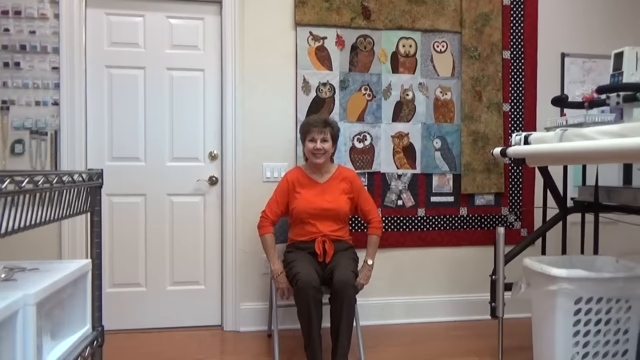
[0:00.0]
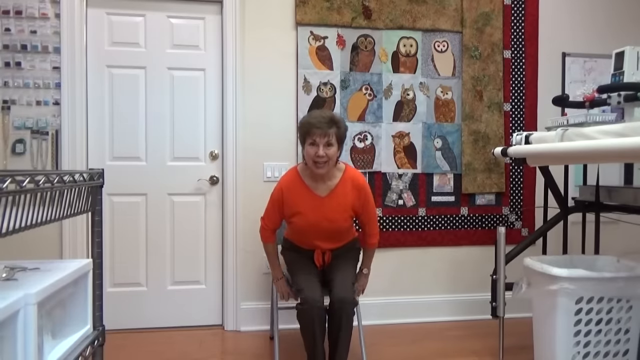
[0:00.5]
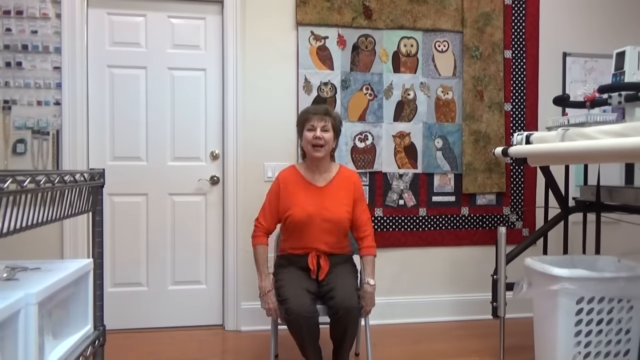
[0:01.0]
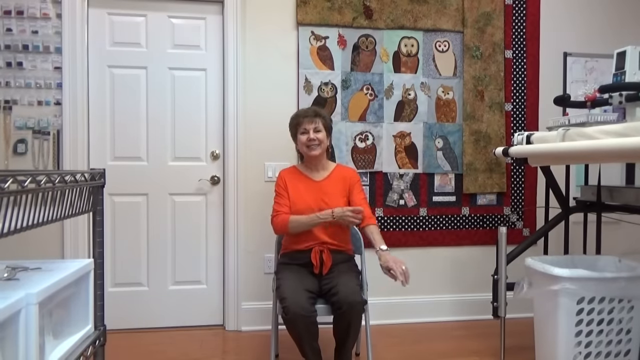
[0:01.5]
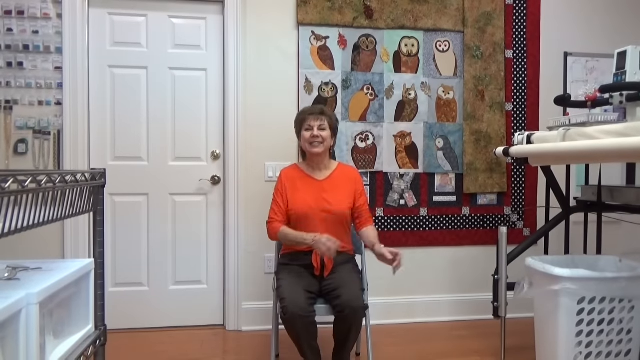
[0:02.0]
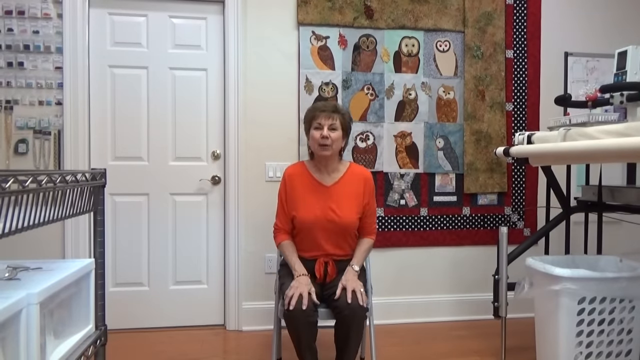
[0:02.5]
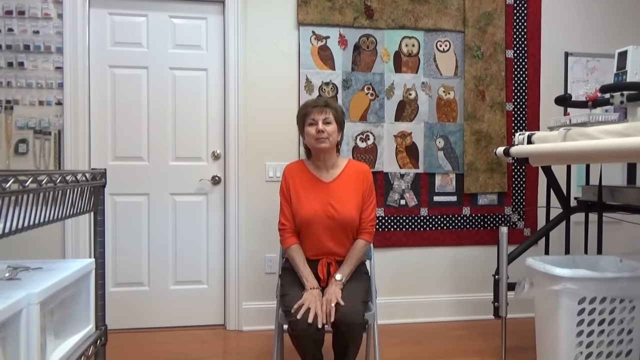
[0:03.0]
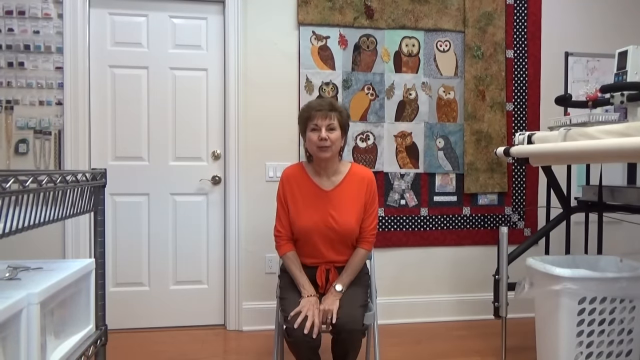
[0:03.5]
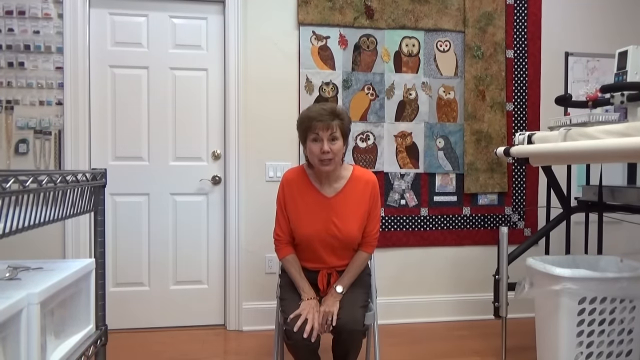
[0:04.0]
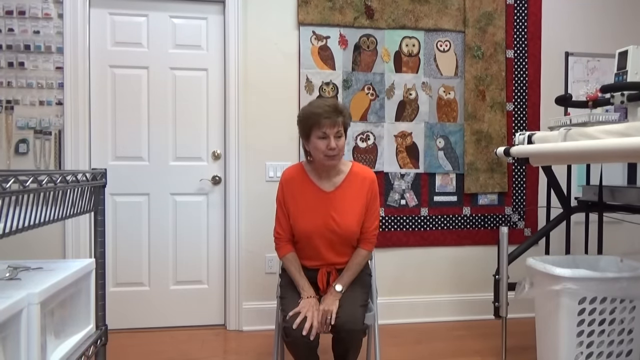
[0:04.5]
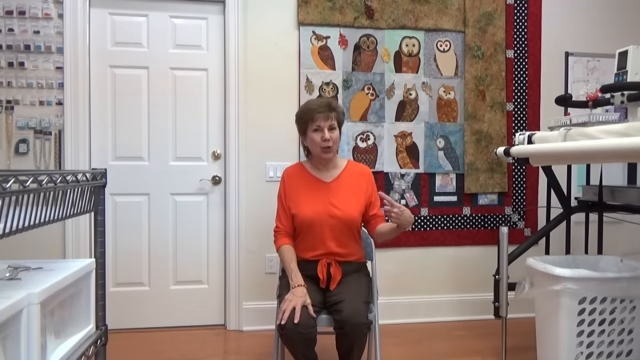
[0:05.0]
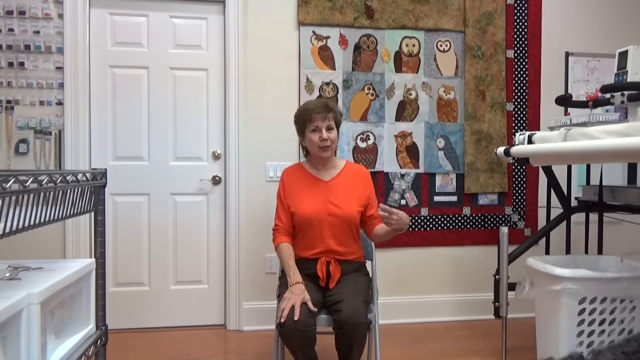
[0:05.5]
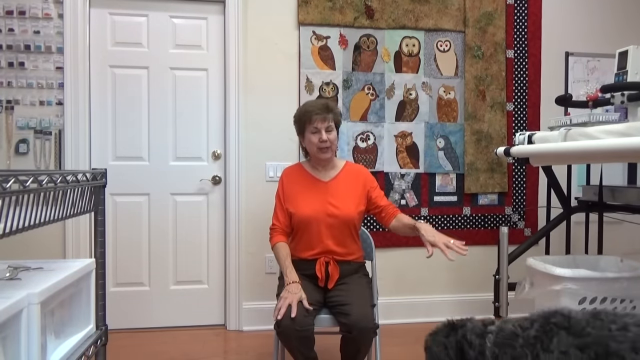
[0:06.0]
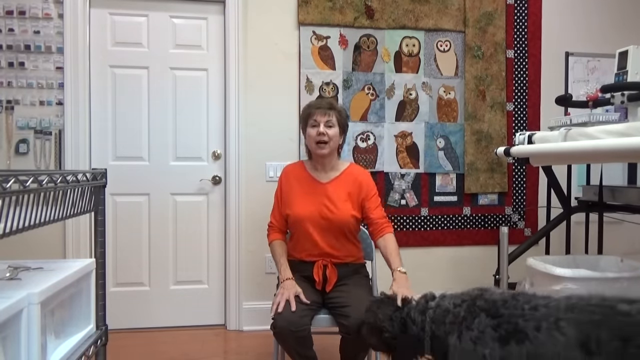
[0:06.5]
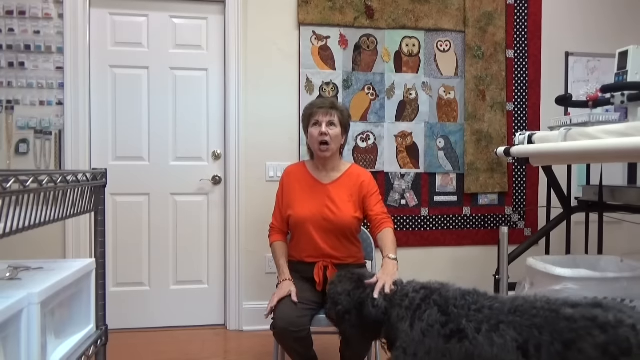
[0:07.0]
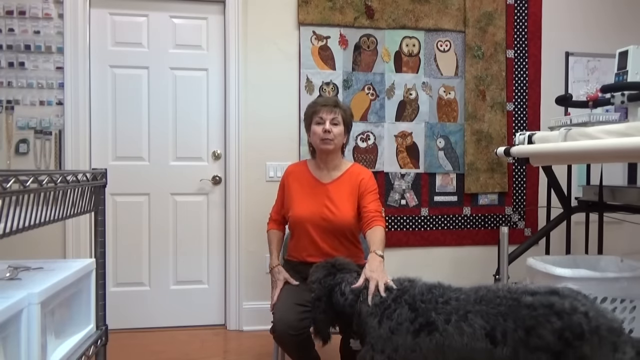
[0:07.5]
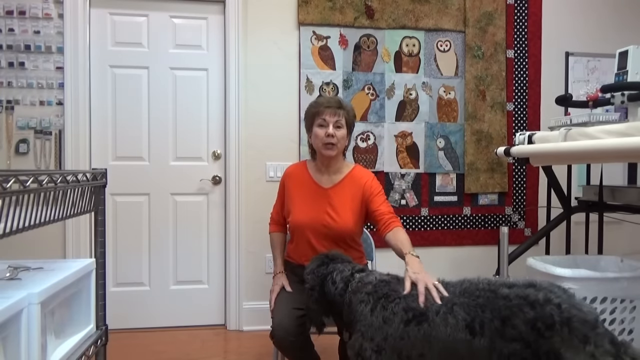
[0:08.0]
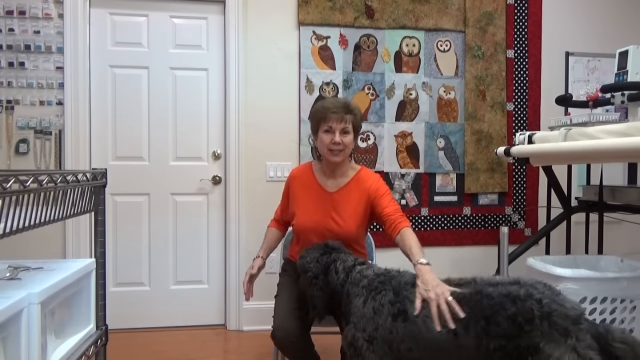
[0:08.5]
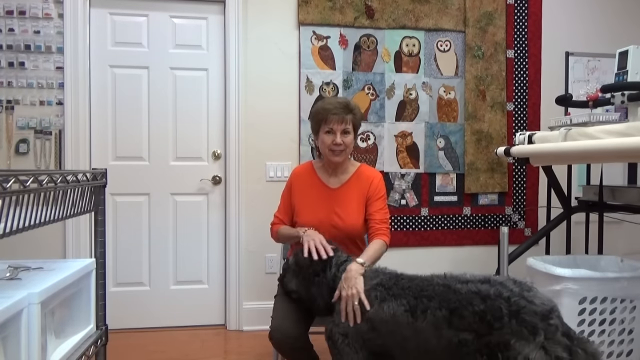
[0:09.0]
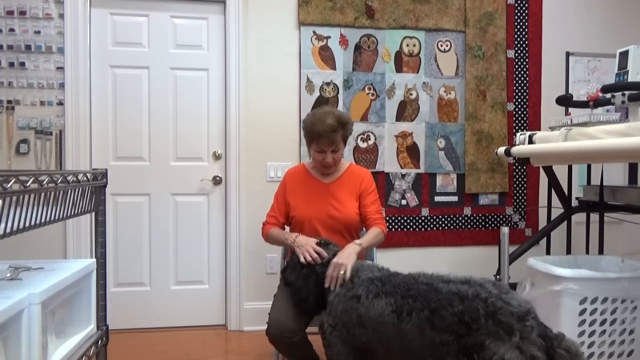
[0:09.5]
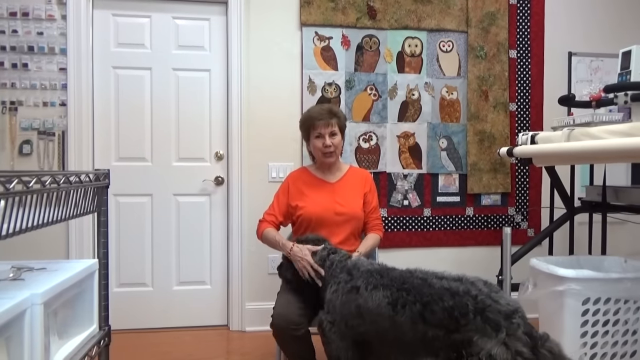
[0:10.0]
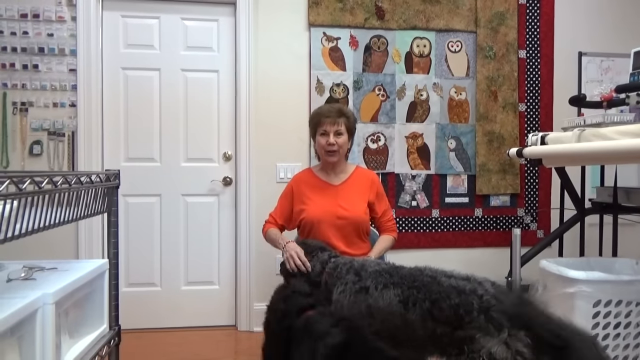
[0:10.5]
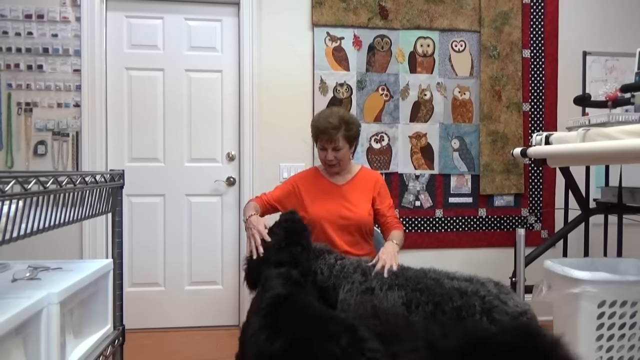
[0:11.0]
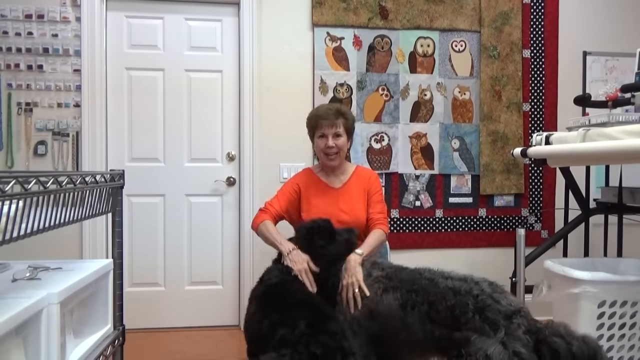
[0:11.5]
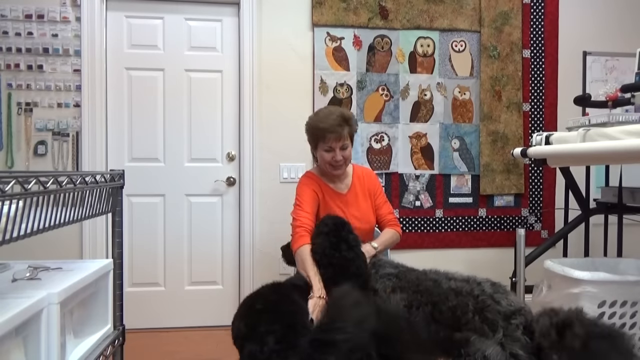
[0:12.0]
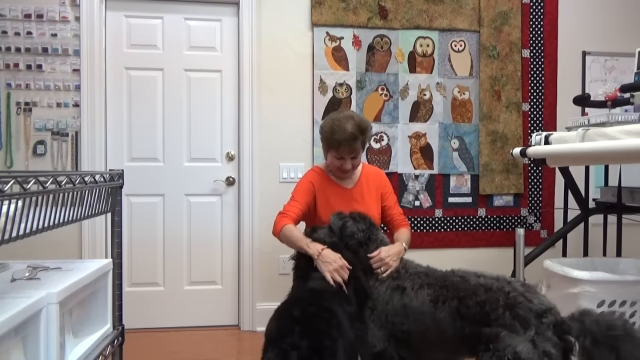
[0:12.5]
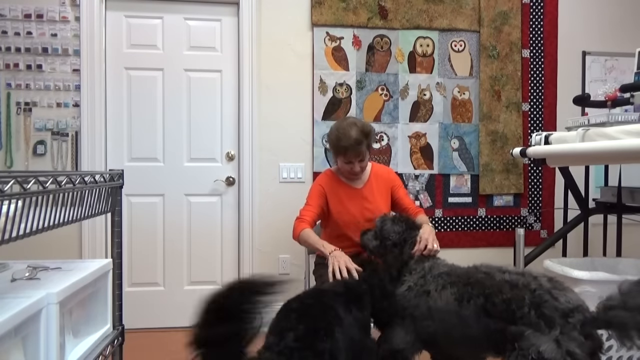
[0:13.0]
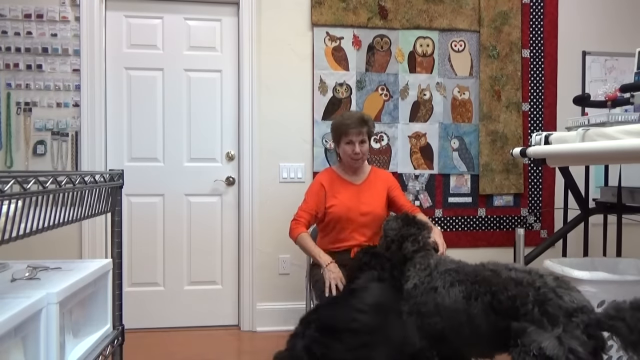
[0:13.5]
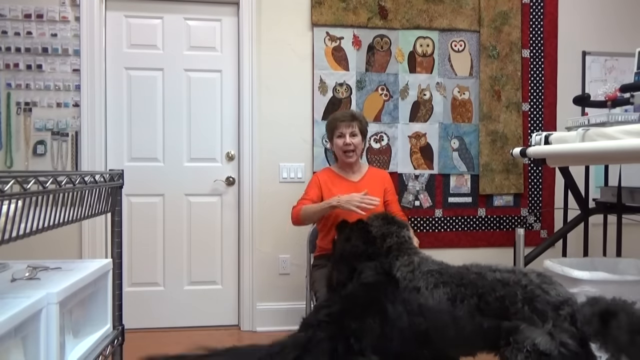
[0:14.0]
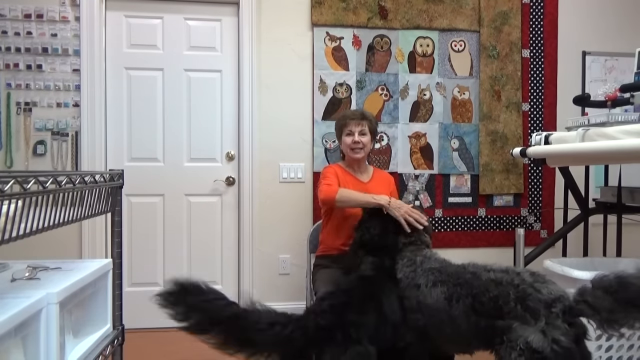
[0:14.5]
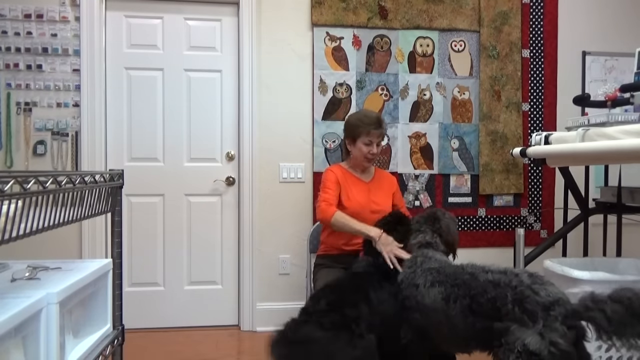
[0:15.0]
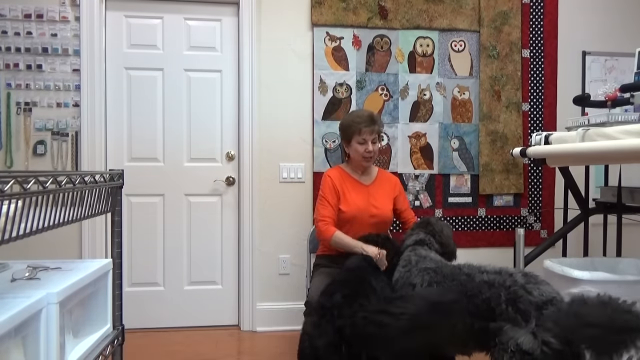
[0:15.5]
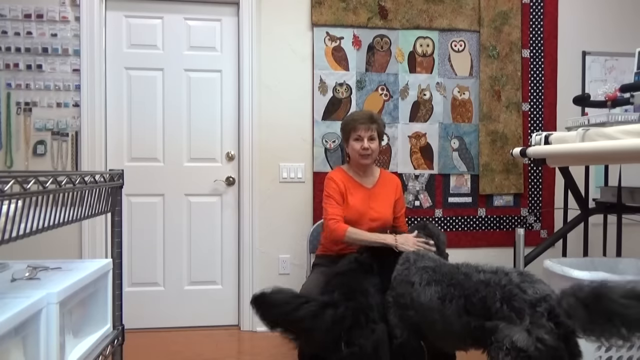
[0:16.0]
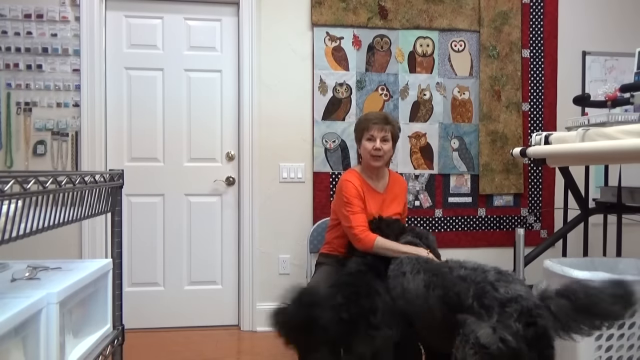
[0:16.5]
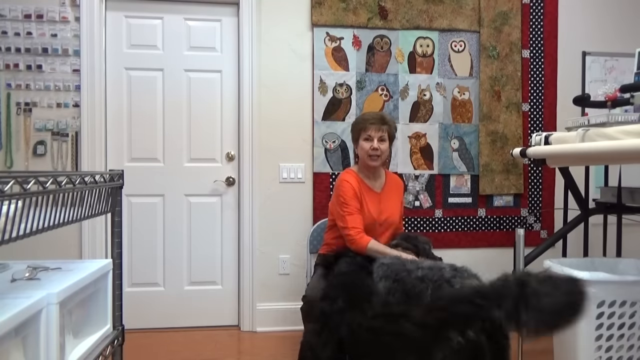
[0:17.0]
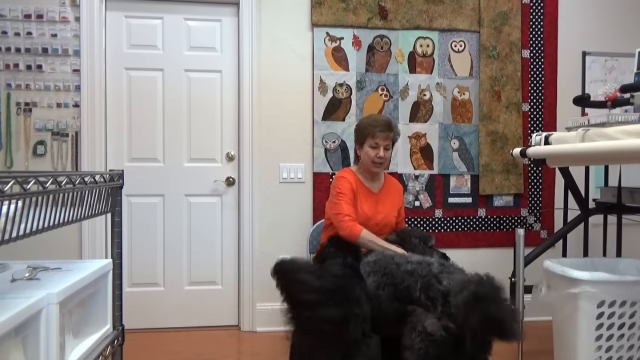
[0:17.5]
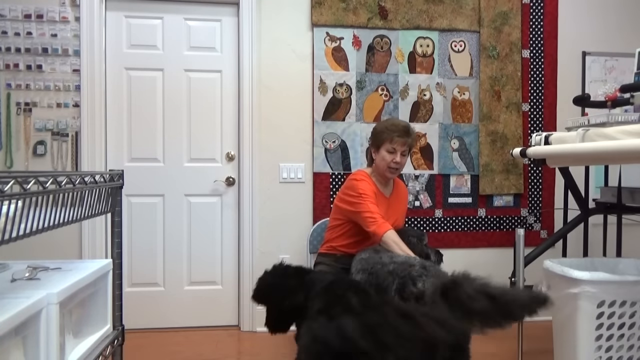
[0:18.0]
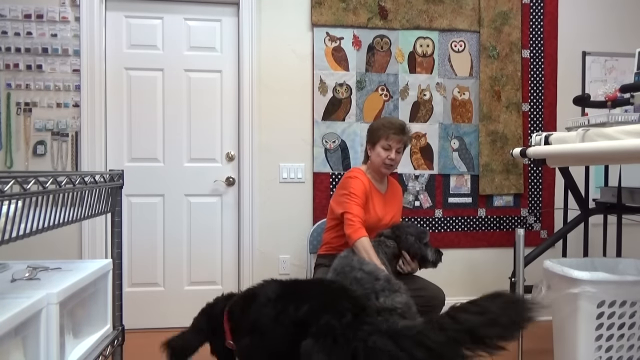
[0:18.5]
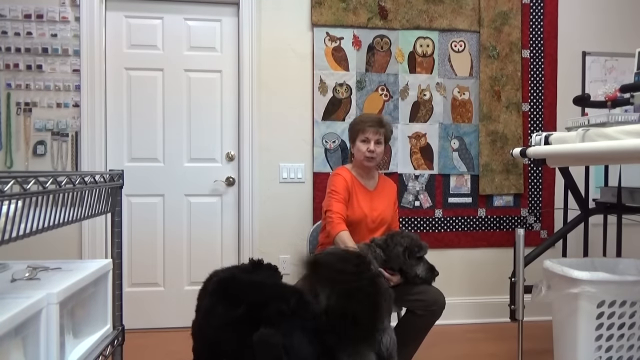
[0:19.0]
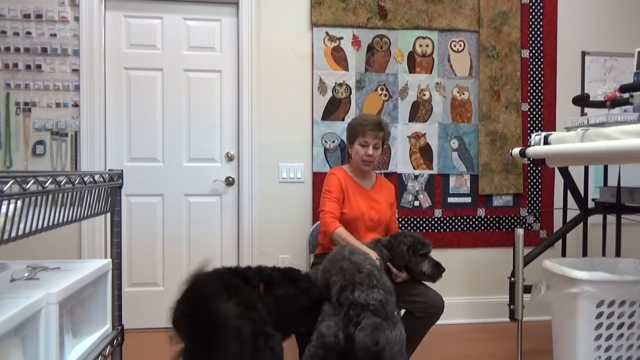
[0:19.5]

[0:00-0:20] An older woman in an orange shirt, tied at the bottom, is sitting in a chair on the left. While she sits, two of her dogs come up to her; they look like they might be some type of lab breed or possibly a different breed. In the back of the room there are about four drawn owls on a poster, a door, a dirty clothes machine and some type of machine hooked up above it. The door behind her is slightly cracked, so it looks to be open just a little. The woman sits there playing with her dogs, which are wagging their tails and seem very happy to see her.